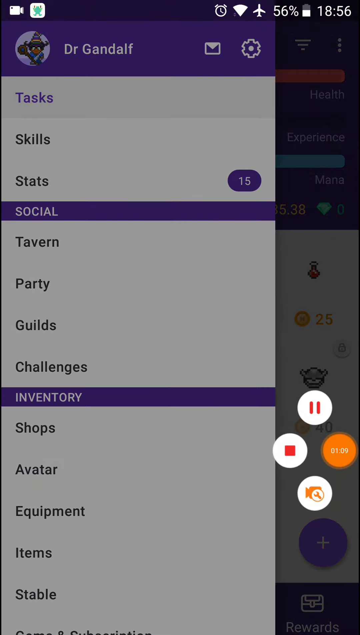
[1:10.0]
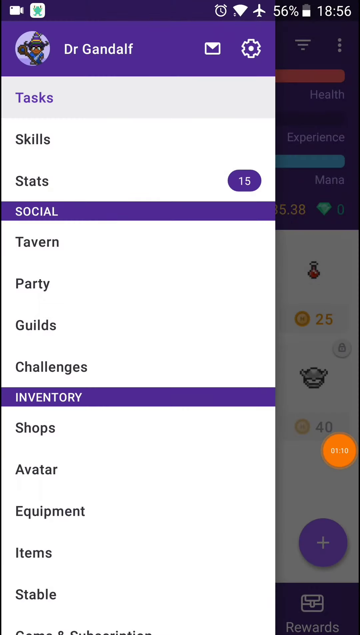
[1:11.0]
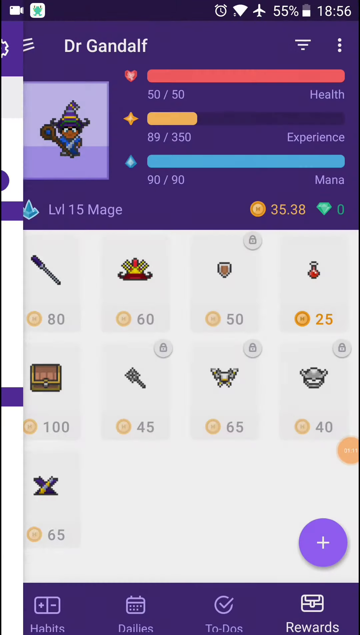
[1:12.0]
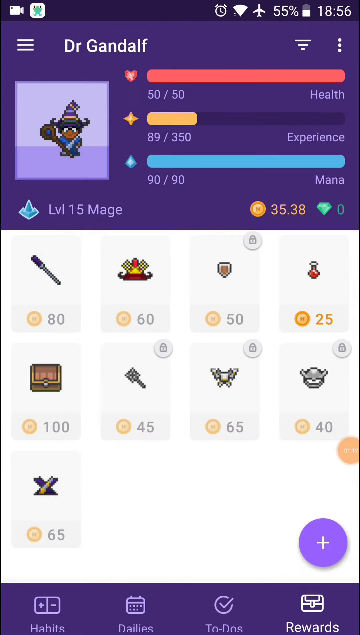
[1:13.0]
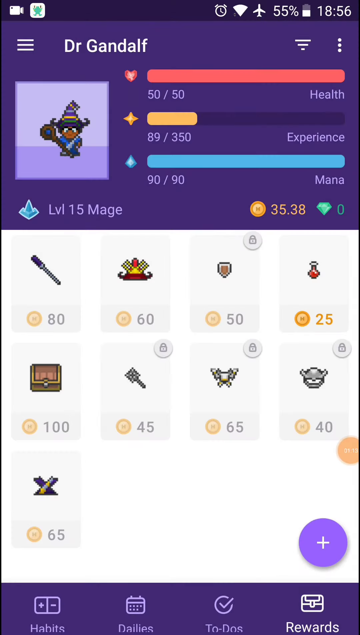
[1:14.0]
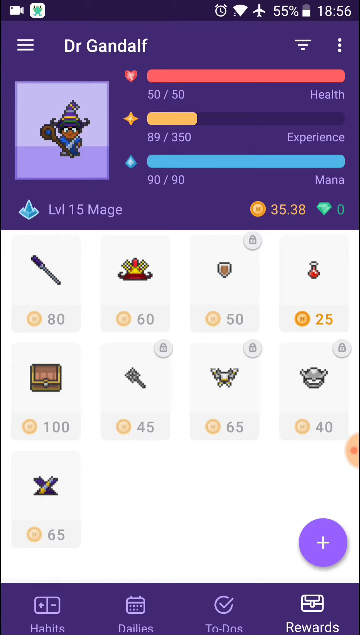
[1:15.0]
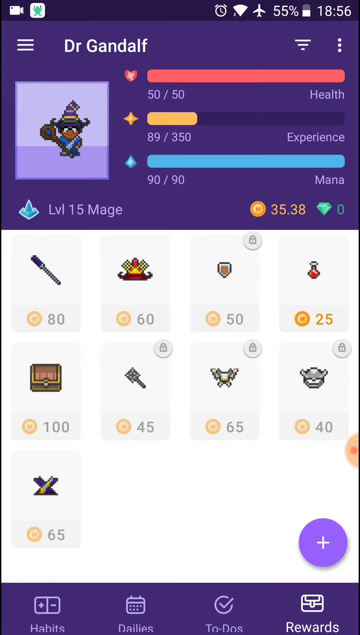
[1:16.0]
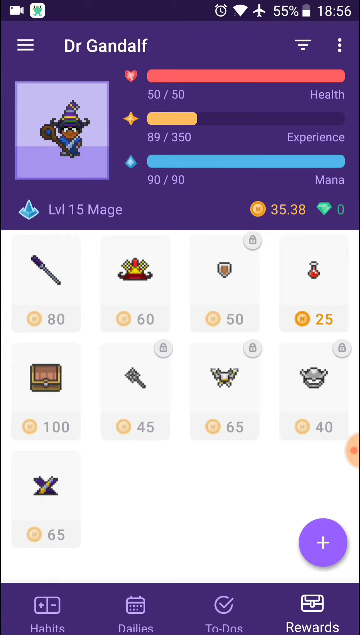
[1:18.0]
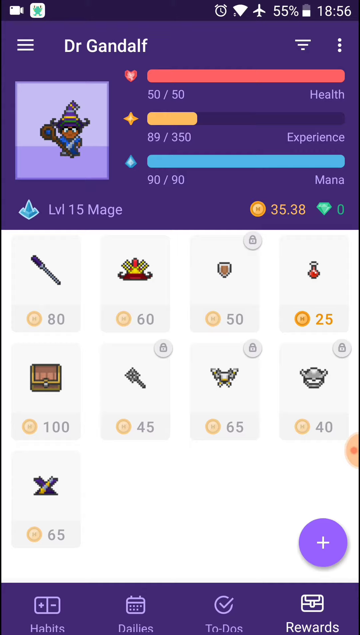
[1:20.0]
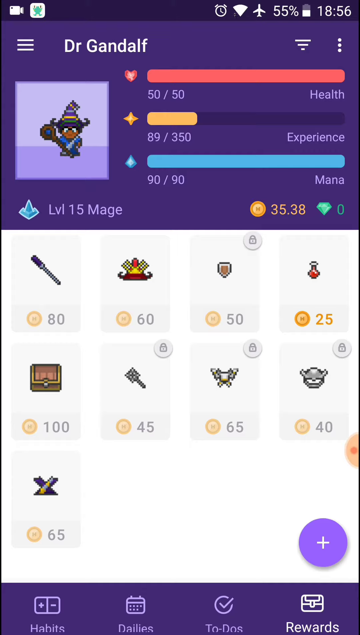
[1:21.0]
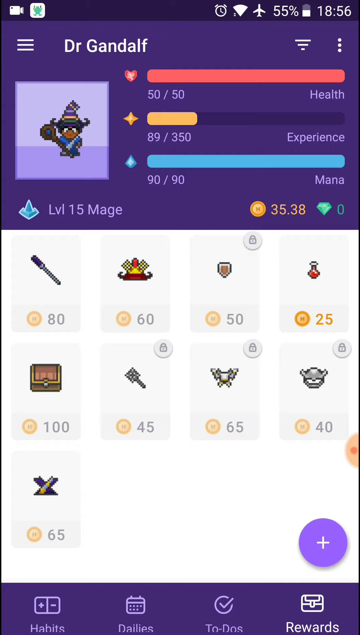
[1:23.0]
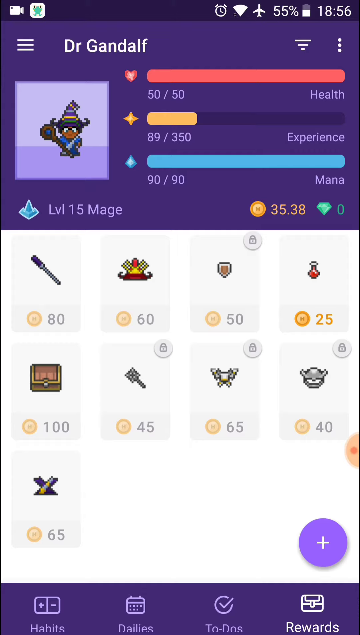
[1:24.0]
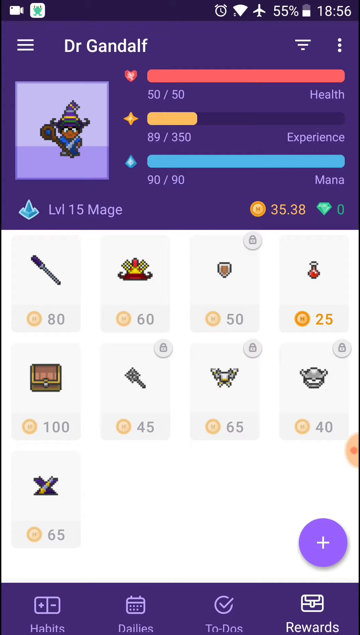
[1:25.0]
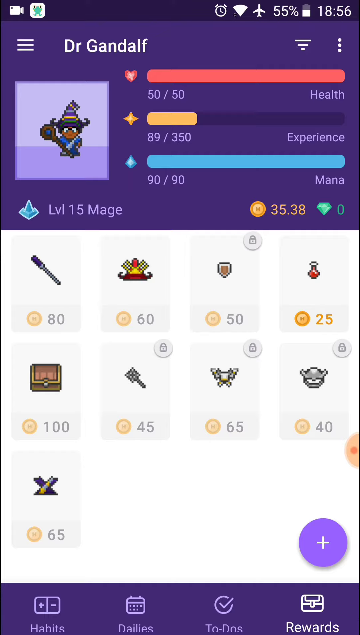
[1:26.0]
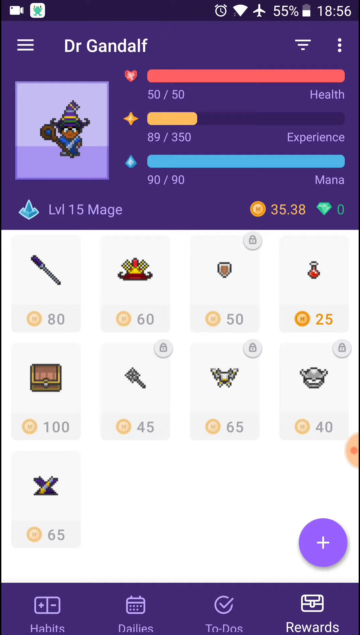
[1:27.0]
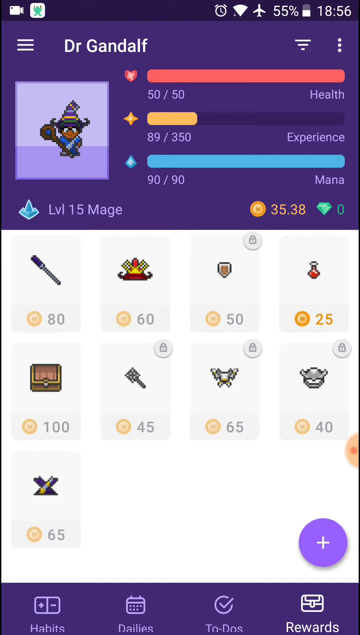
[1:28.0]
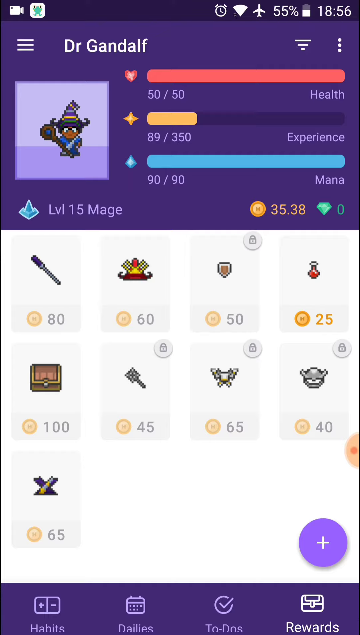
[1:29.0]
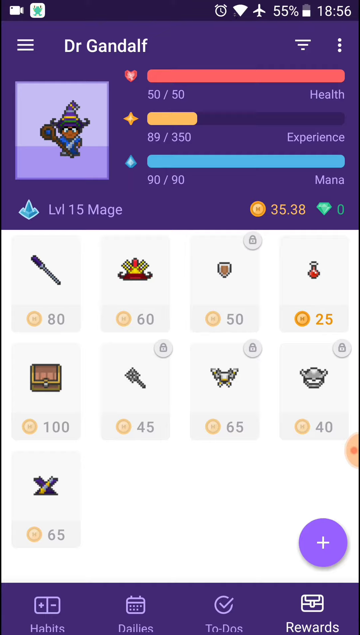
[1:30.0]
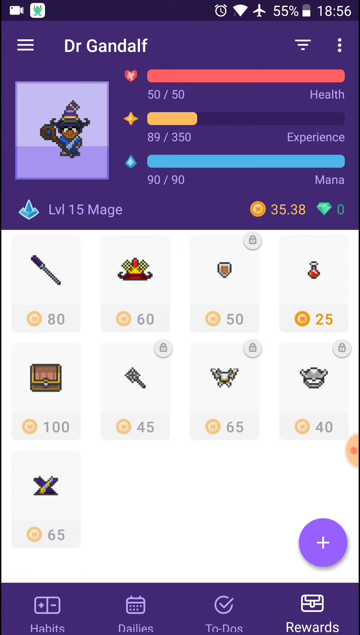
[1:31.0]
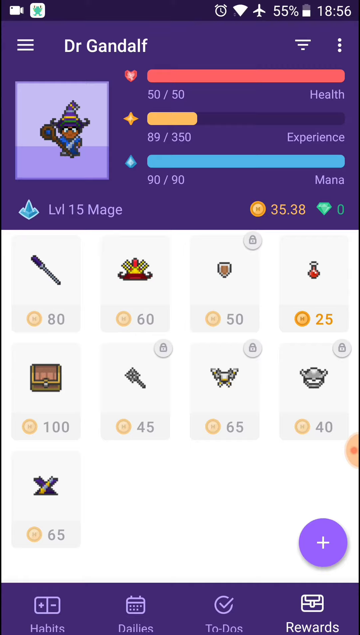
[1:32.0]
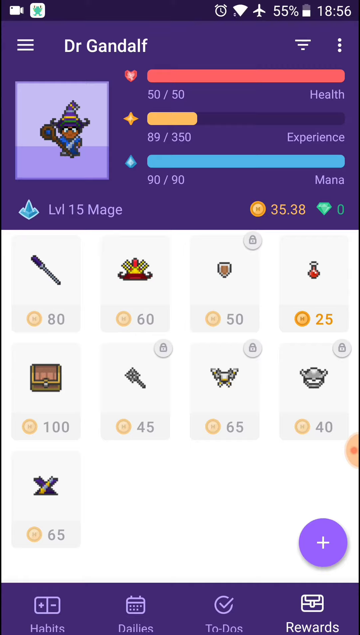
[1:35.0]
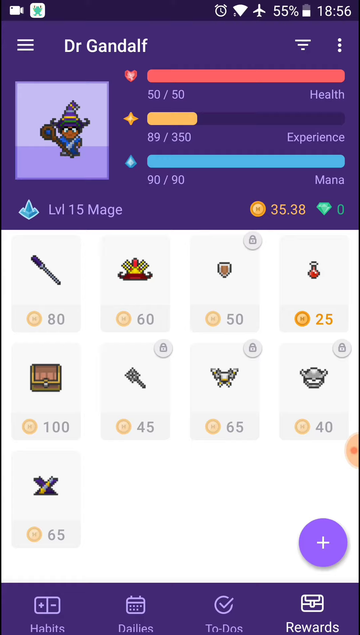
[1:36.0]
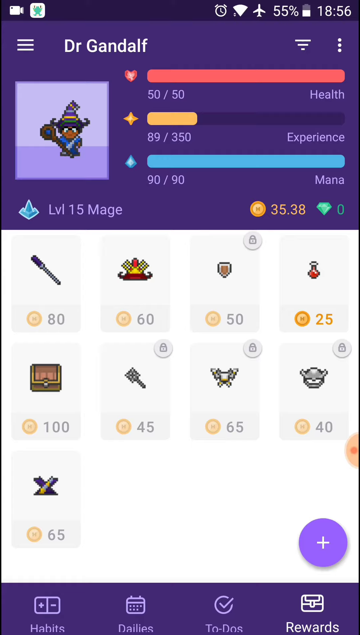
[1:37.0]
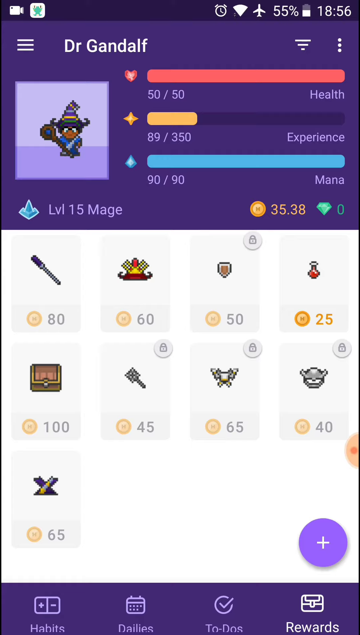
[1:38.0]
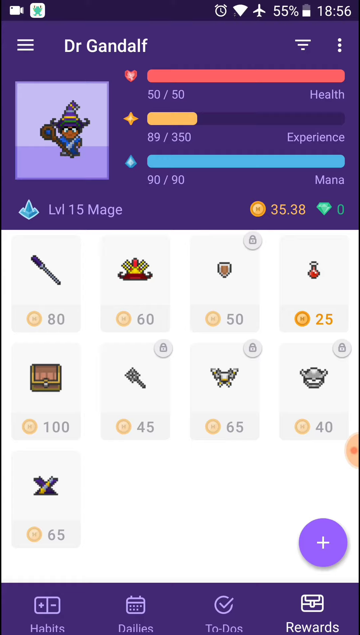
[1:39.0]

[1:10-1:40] With the orange circle popped out from the bottom right side of the phone, a stop button is to its left and a pause button is to its top left. There is also a button on its bottom left side whose function is unclear. The small buttons then disappear; the orange circle remains, then shrinks and becomes very see-through, so it is barely noticeable. The screen shows the character named Dr. Gandalf in the top left corner, a wizard wearing a very colorful wizard hat and holding a staff, along with the character's stats for health, experience and mana. At the bottom are nine different accessories or weapons that the user can purchase, shown on a white background. The user stays idle on this page.